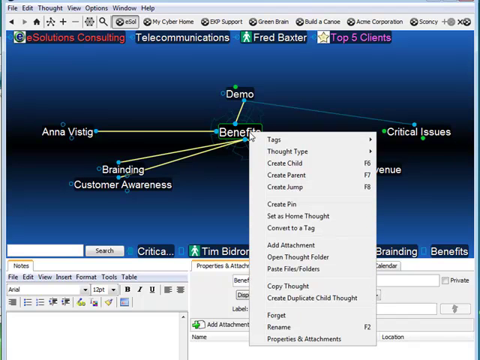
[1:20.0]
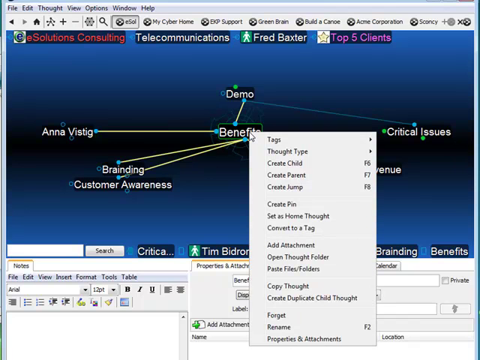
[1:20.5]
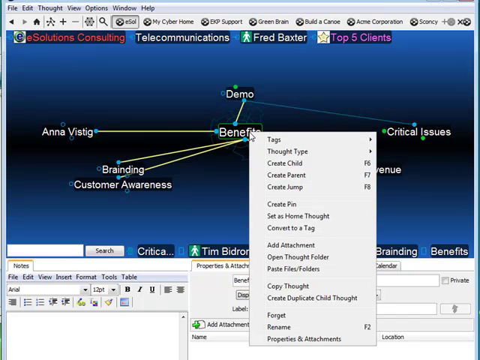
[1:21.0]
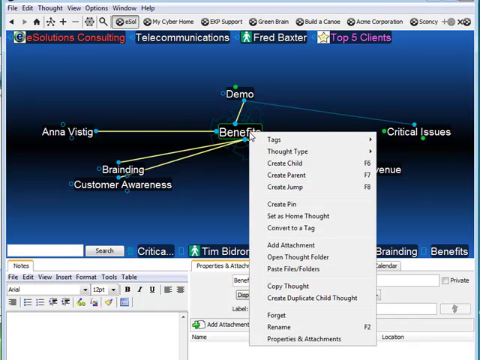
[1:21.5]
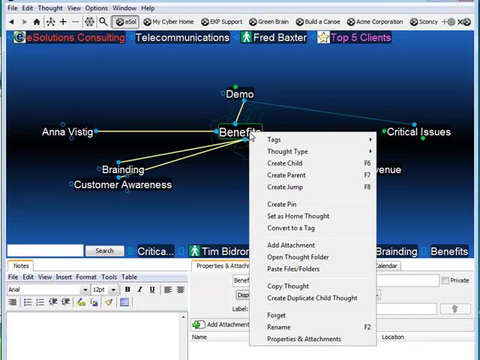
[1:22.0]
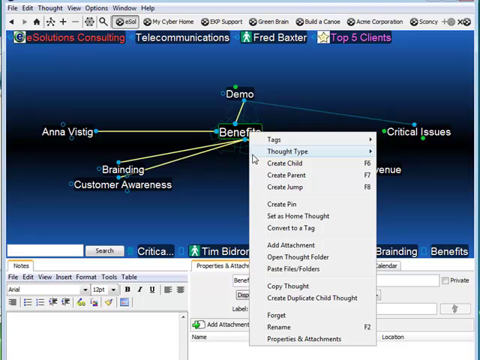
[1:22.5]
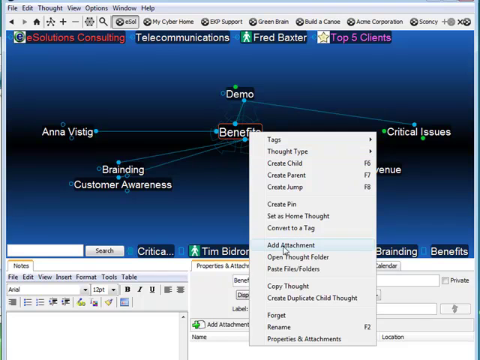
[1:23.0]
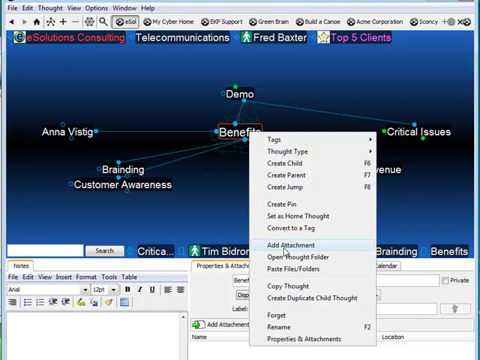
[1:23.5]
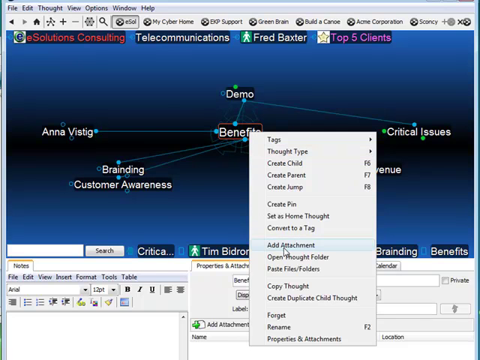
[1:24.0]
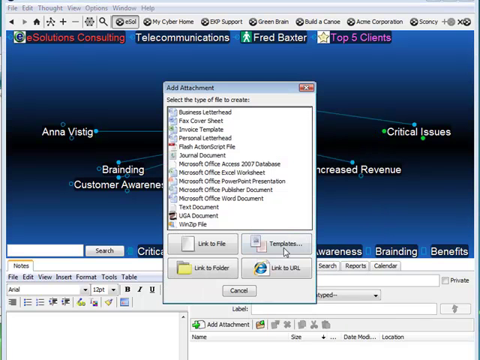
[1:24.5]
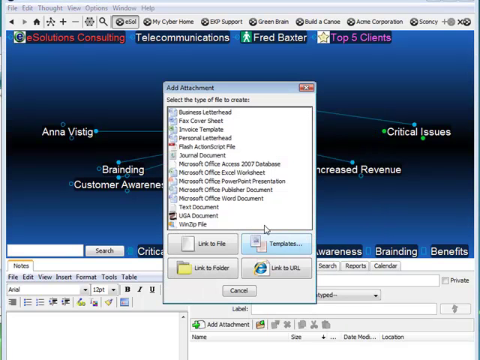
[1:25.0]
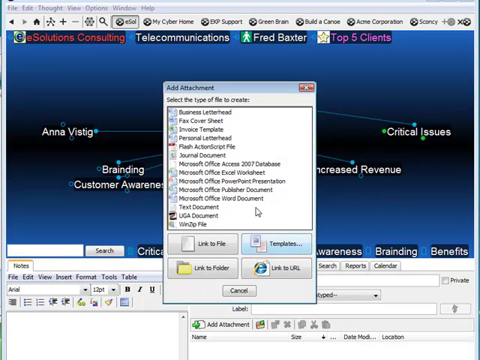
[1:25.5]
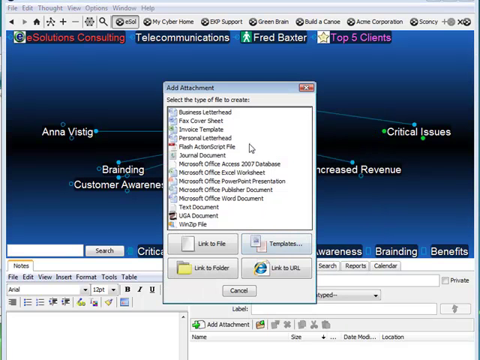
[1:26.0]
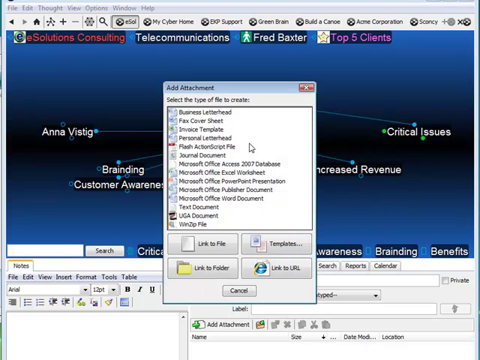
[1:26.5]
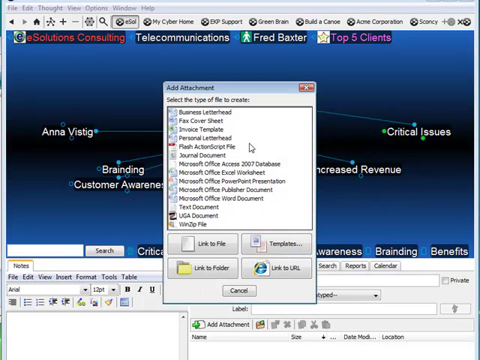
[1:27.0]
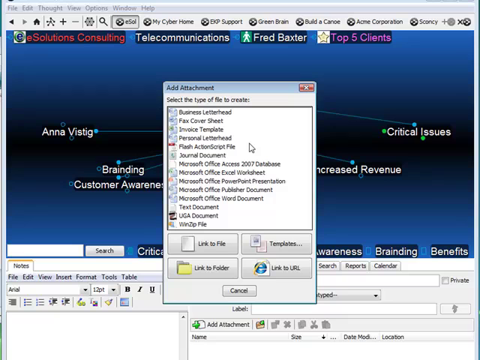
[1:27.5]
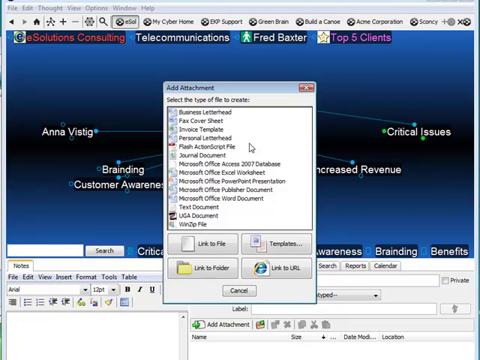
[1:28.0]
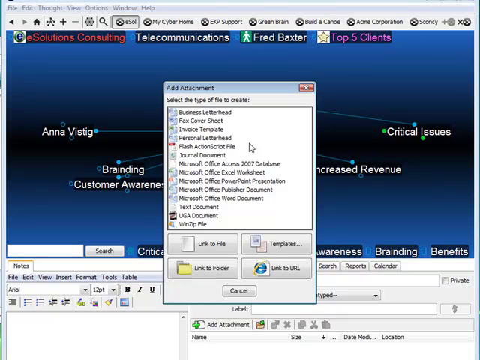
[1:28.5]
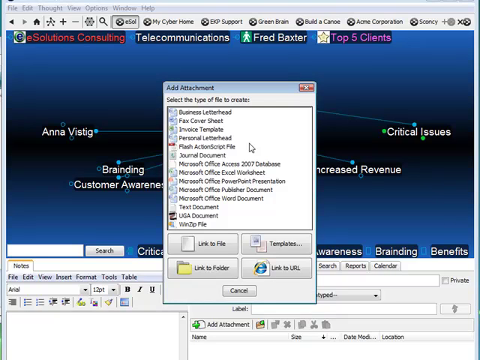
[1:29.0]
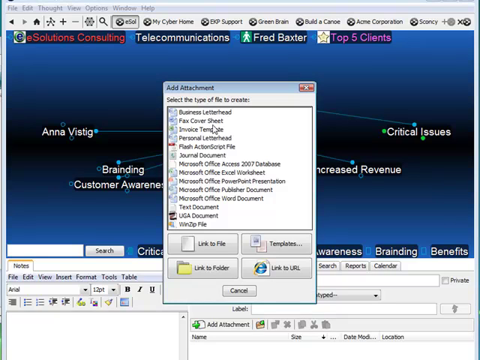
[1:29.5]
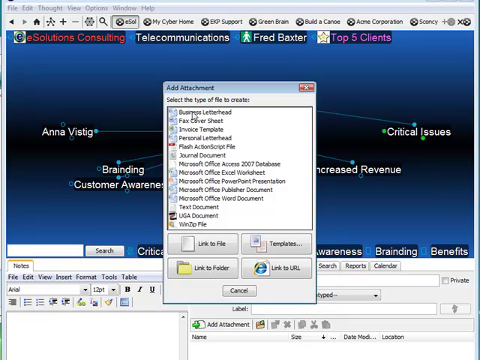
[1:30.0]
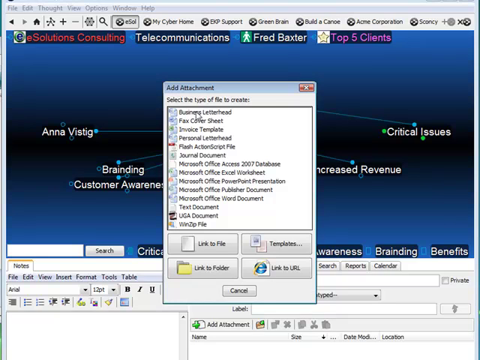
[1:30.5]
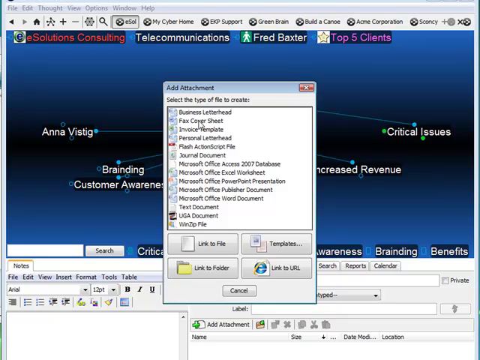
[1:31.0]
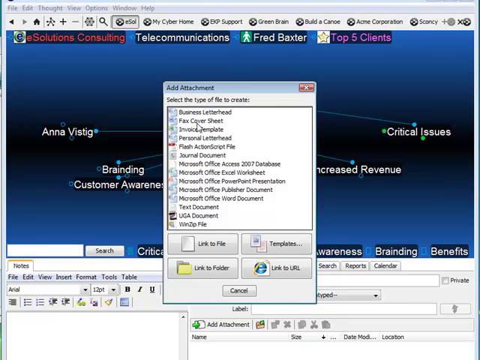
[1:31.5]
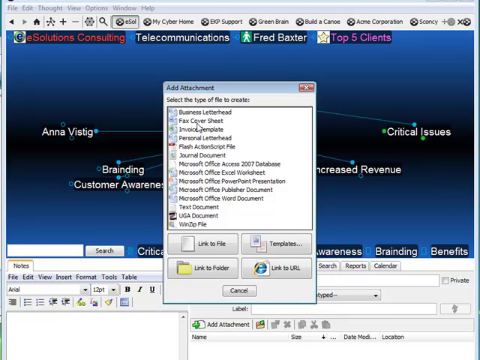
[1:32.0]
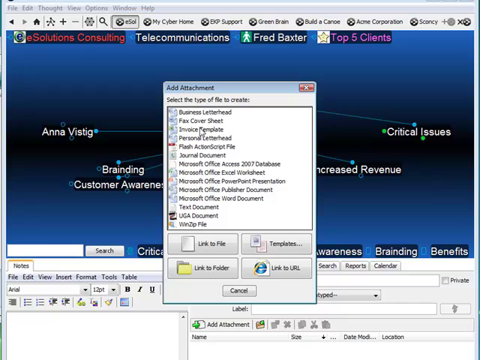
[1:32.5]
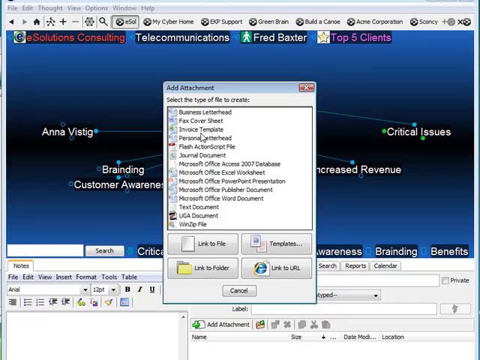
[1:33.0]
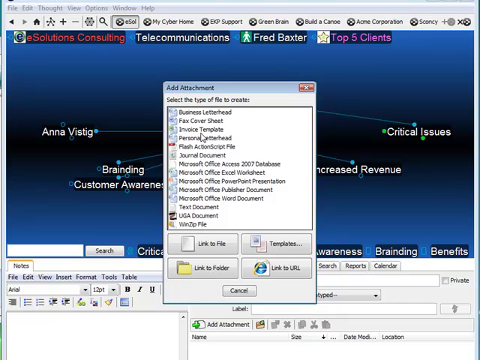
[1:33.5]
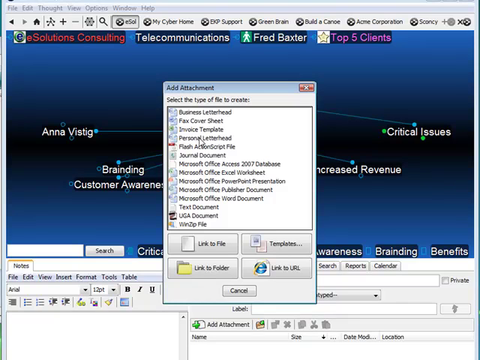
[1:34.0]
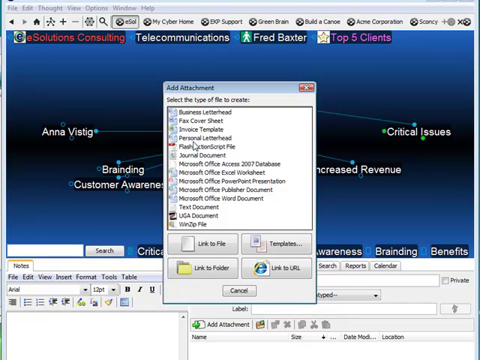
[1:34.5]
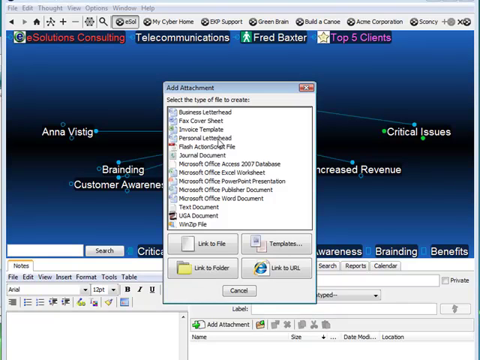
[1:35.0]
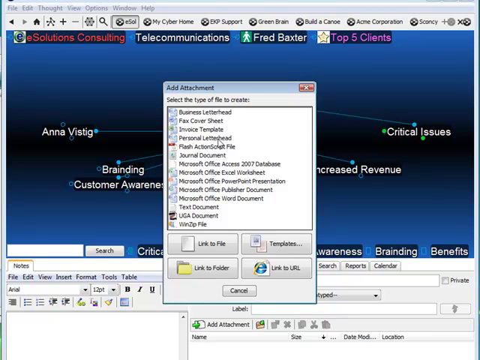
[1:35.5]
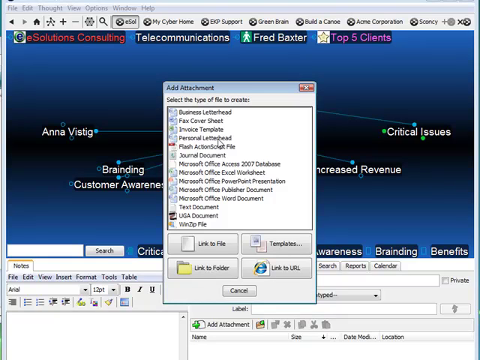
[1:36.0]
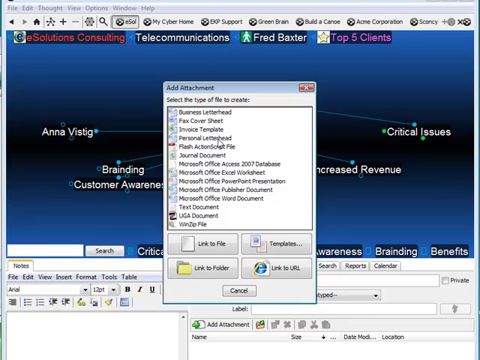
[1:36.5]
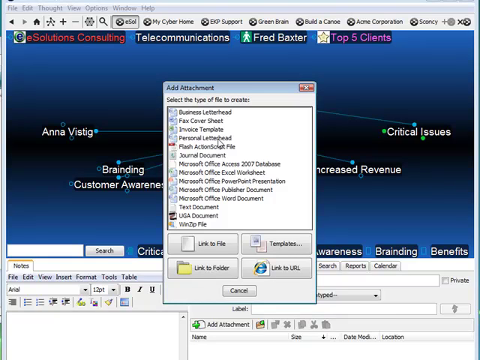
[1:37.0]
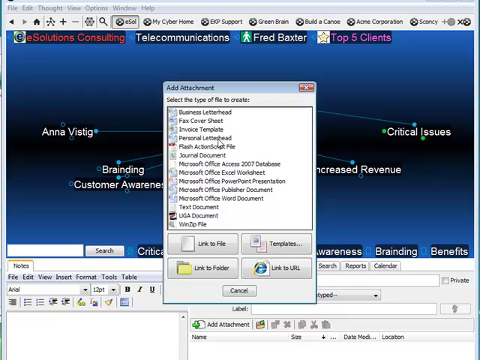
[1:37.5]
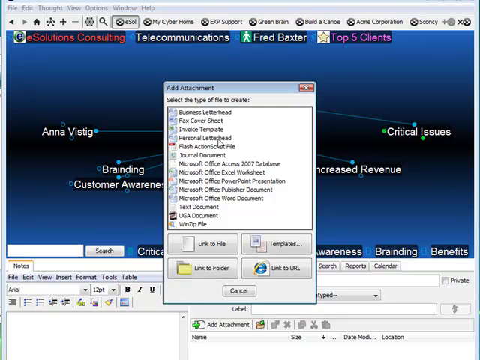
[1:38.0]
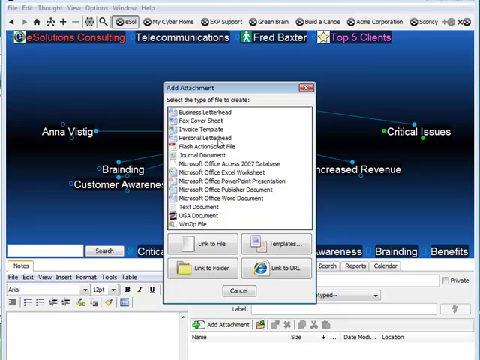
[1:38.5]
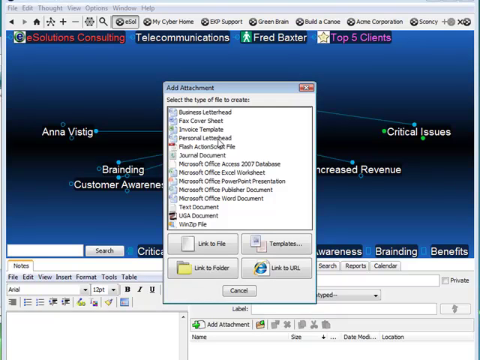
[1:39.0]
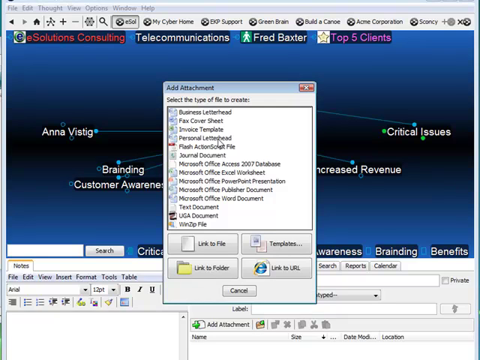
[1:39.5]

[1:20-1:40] The user right-clicks on "benefits" again, bringing up the menu with "tags," "thought type," "create child," "create parent," "create jump," "create pin," "set as home thought," "convert to a tag," "add attachment," "open thought folder," "paste file/folders," "copy thought," "create duplicate child thought," "forget," "rename," "properties" and "attachments," with more below that cannot be made out. He chooses "add attachment" again and hovers over the several options without choosing anything.